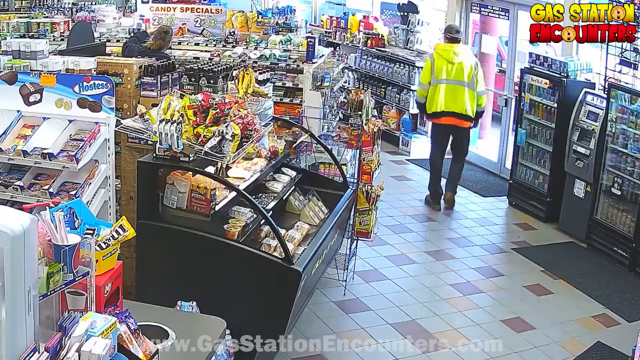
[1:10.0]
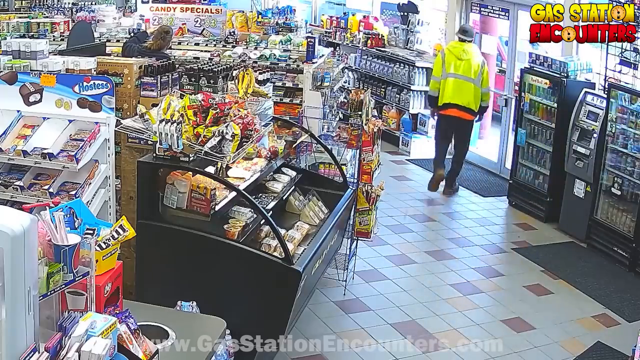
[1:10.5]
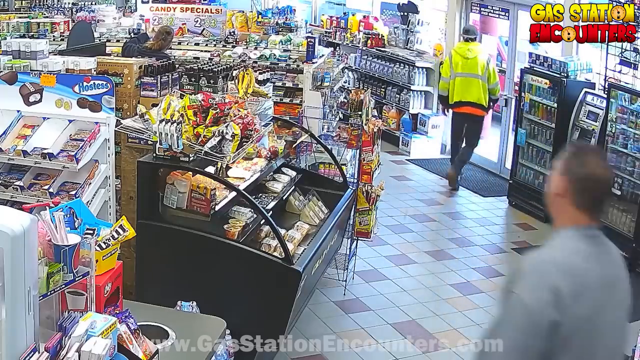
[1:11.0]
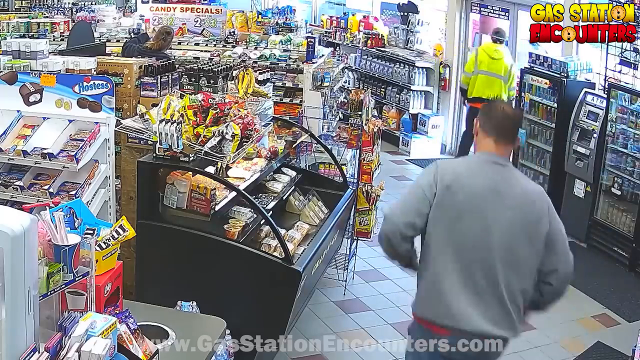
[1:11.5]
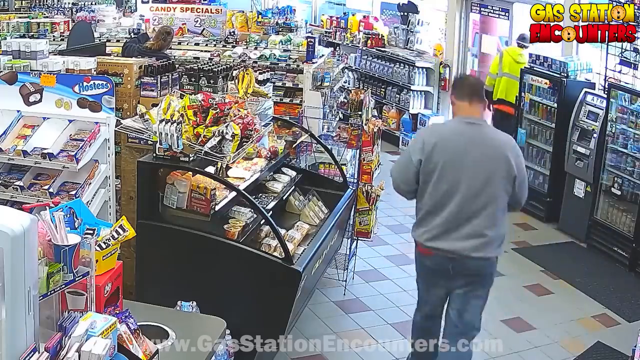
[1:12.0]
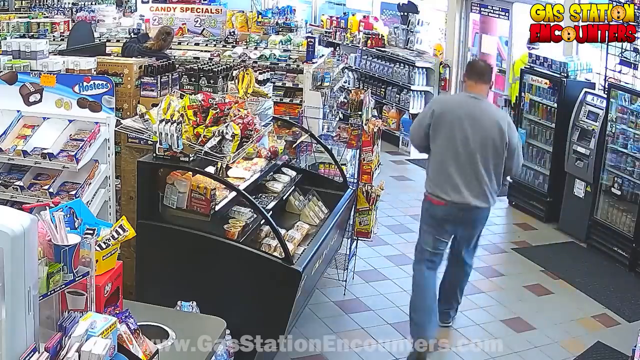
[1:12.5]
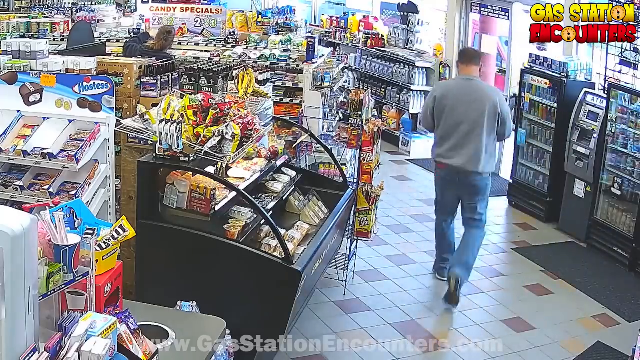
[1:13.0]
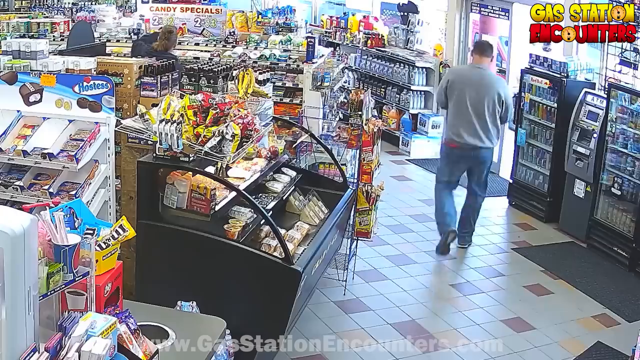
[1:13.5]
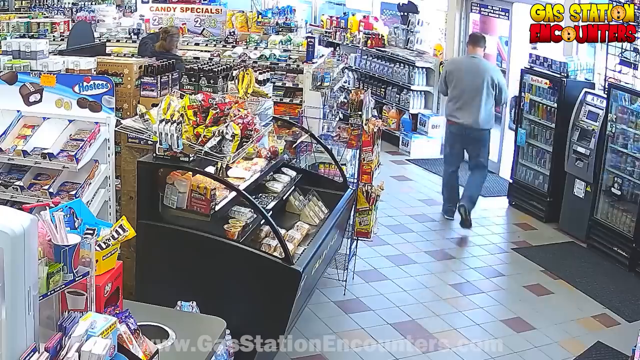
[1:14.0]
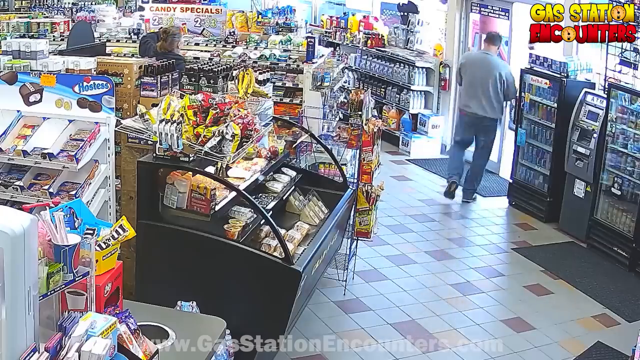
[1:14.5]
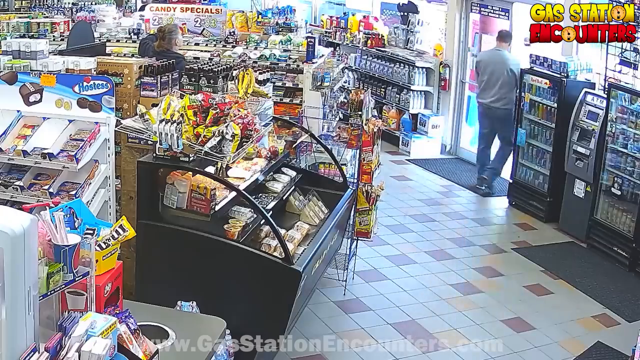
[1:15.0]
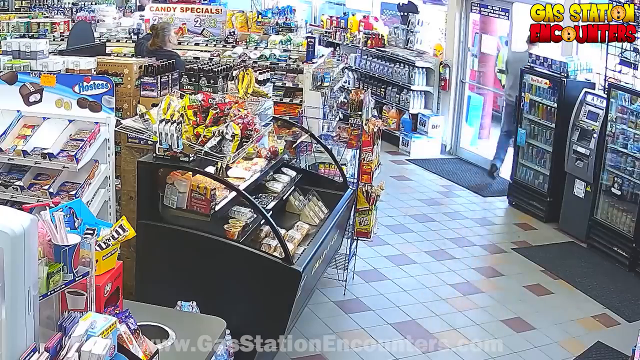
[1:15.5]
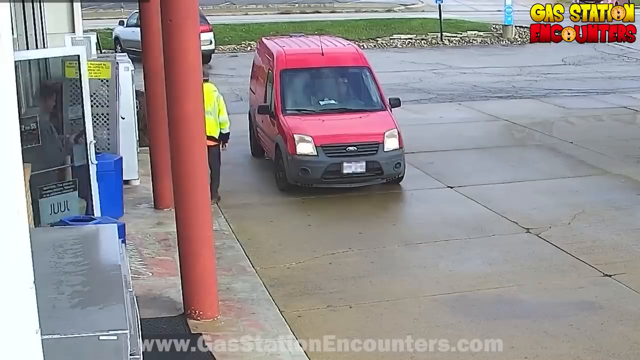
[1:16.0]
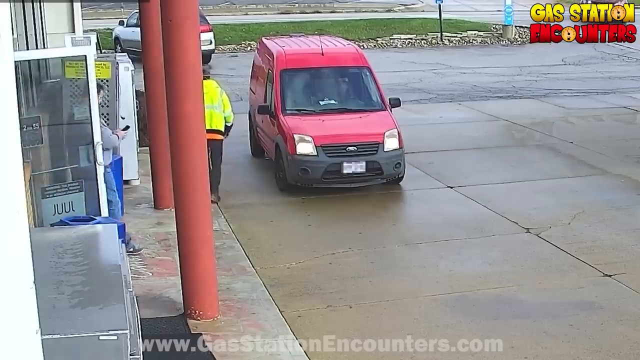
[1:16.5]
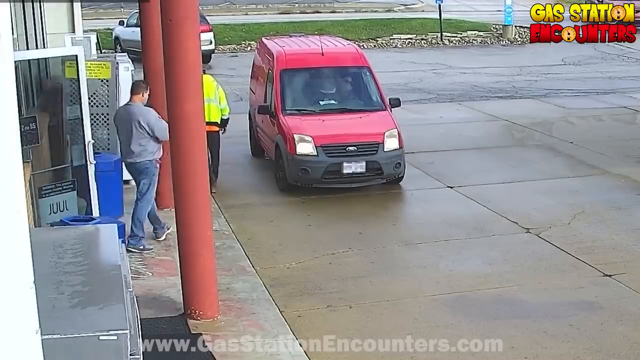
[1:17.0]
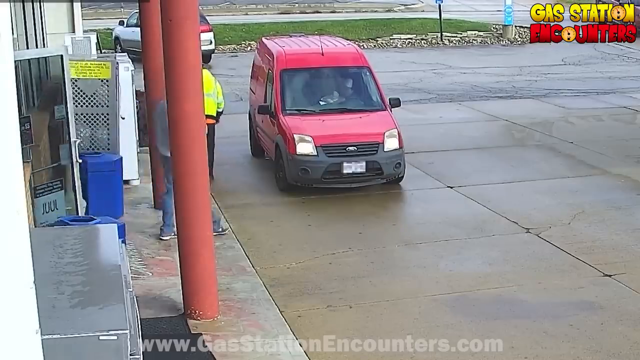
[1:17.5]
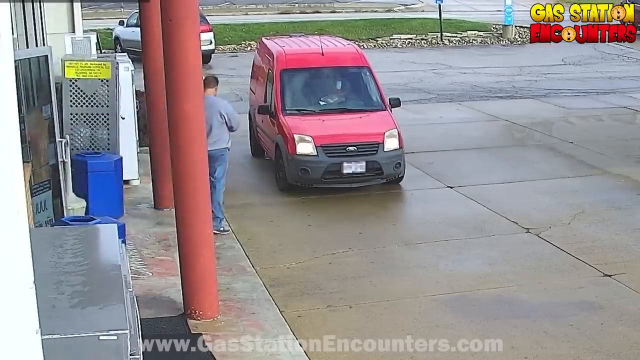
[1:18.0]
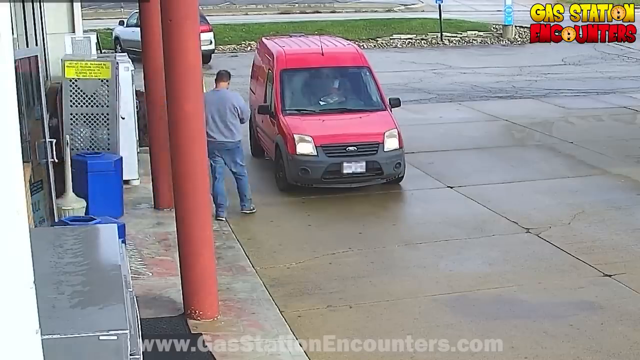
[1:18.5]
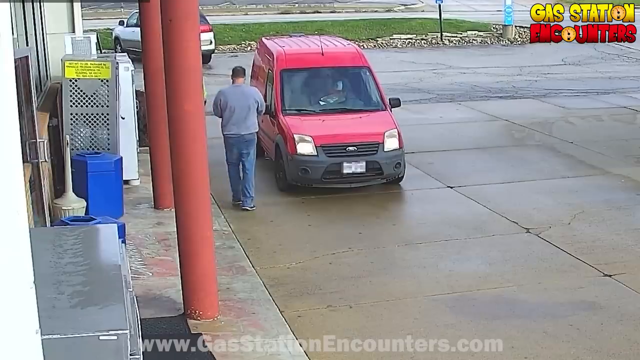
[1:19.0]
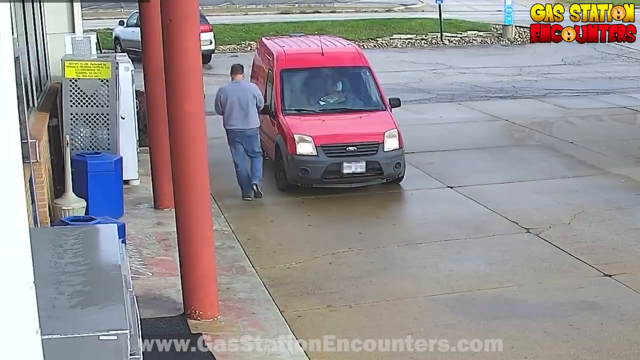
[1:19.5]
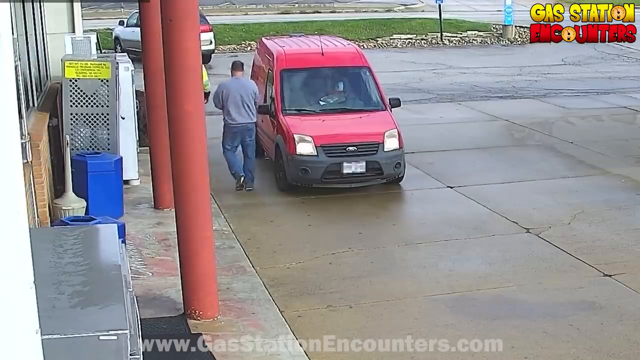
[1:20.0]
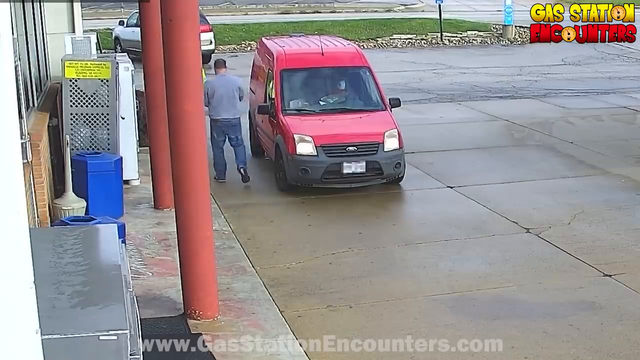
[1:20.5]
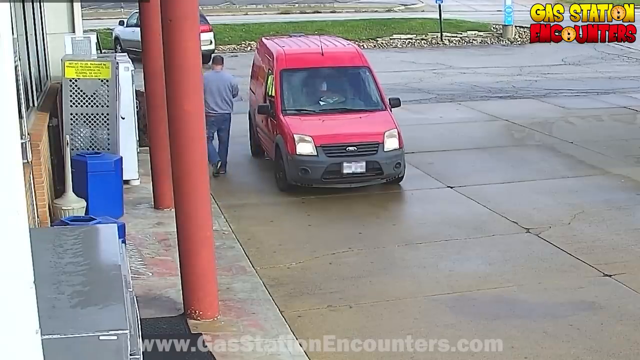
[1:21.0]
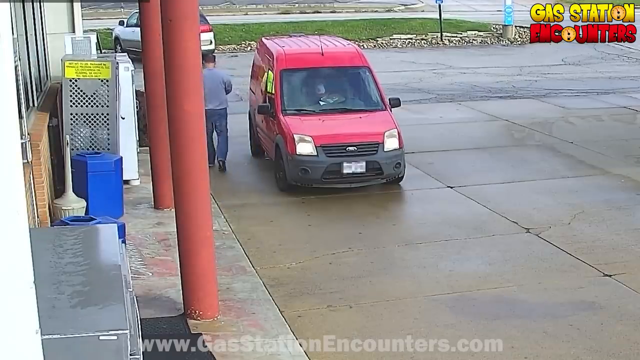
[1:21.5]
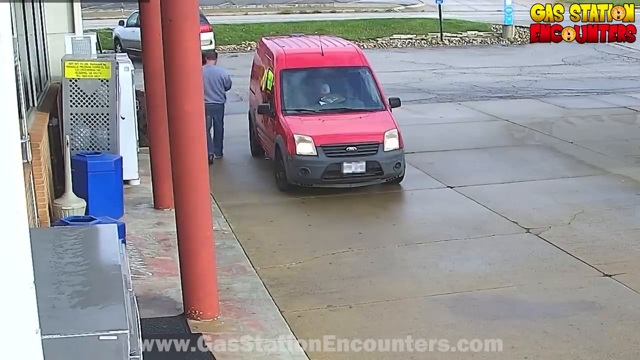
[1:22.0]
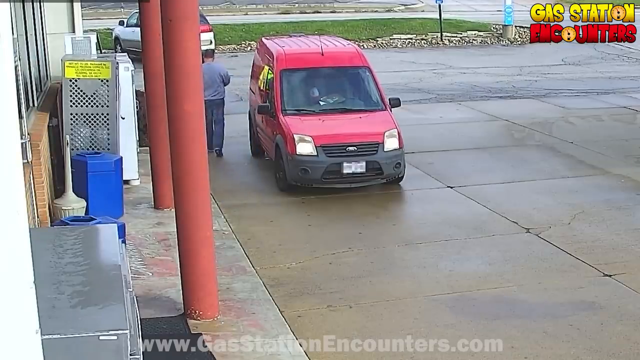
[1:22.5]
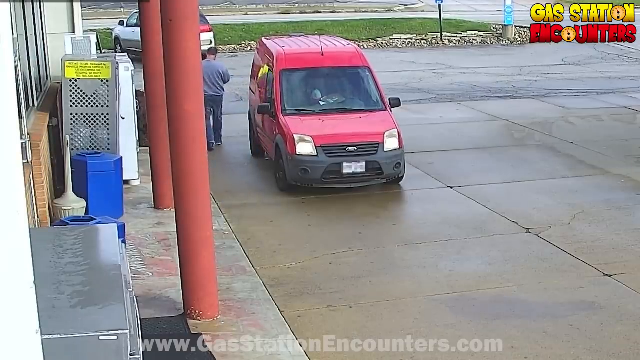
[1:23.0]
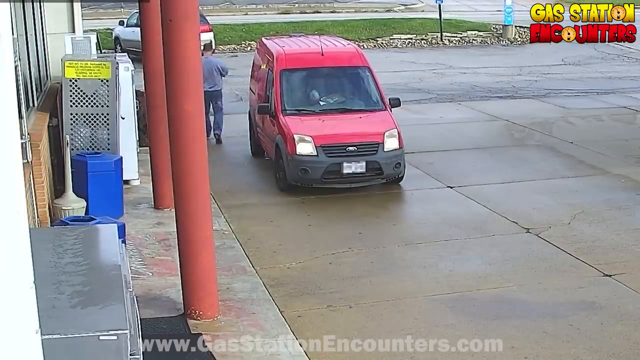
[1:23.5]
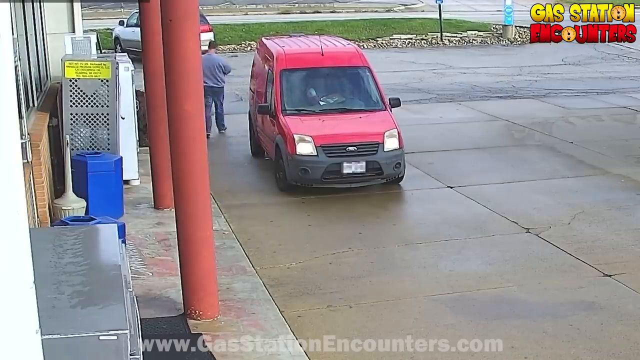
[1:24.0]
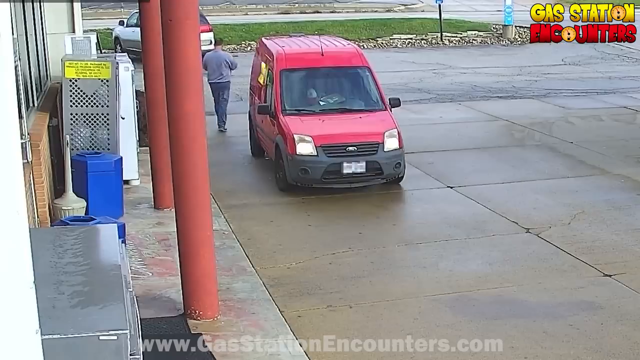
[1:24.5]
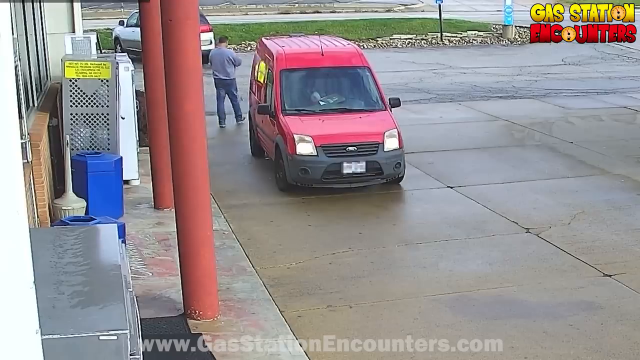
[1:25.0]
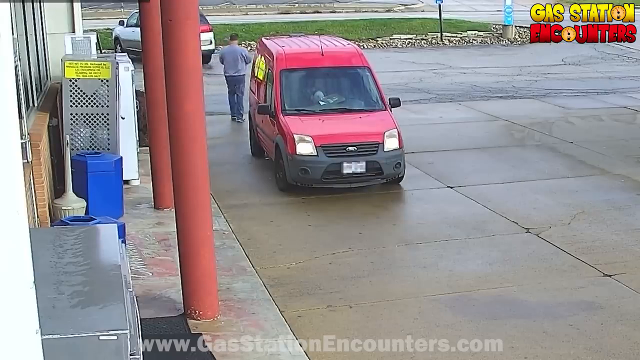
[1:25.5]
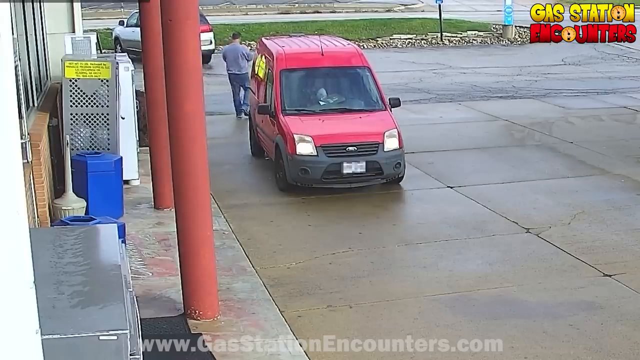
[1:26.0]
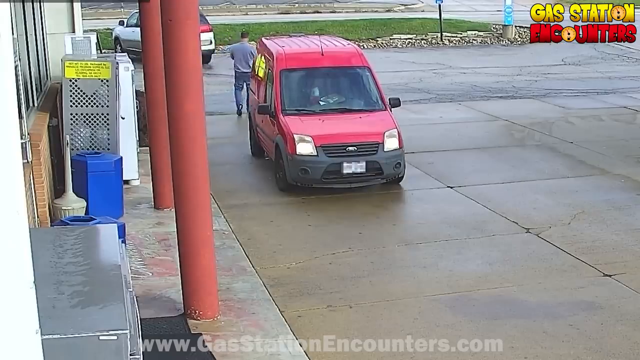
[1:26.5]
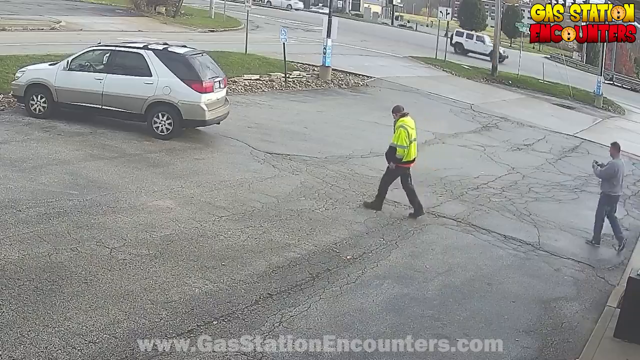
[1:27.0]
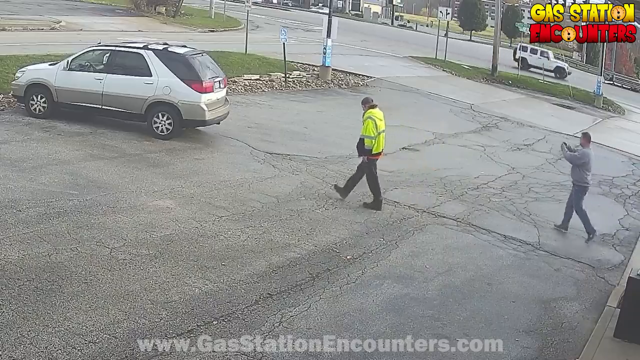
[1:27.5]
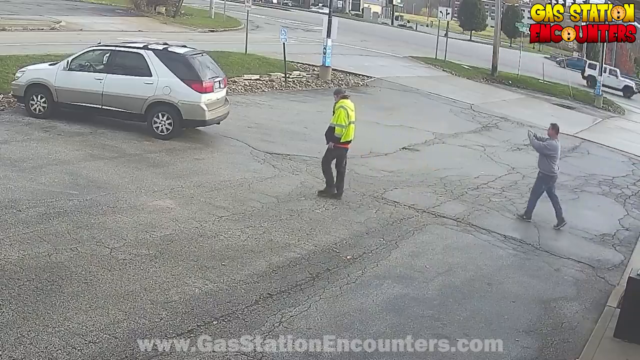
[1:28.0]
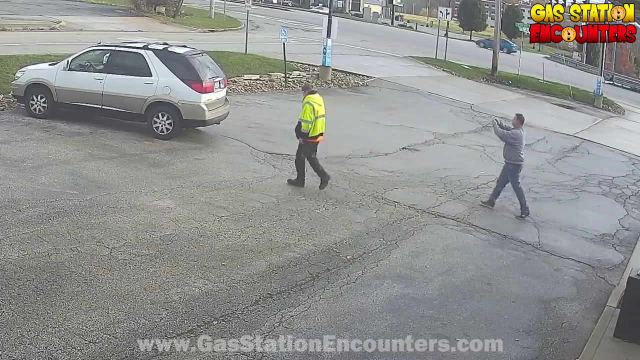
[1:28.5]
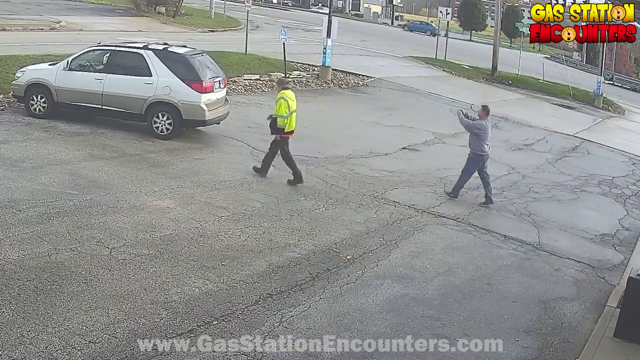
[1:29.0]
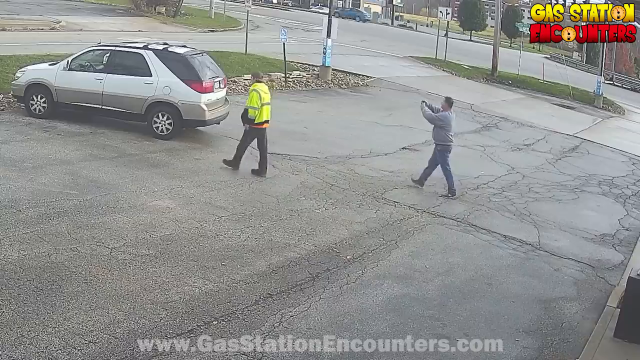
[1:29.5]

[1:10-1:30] The man in the yellow jacket walks out of the gas station. Before he reaches the doorway, a man in a gray shirt is a few feet behind him and looks like he might follow him. The man in the gray shirt approaches the doorway as well, after the man in the yellow jacket has already exited. The next shot is from a camera outside the gas station, where a red van is parked, shown from the front. There are two giant red poles, and to the left of that what looks like a blue trash bin and a tan cigarette ashtray. The man in the gray shirt is shown from behind, apparently following the man in the yellow jacket. In the next shot, the man in the yellow jacket walks away, possibly toward a white SUV, and the man in the gray shirt looks like he has a phone or camera out and is photographing the vehicle. Both men are shown from a side angle in the parking lot, with cars driving by.